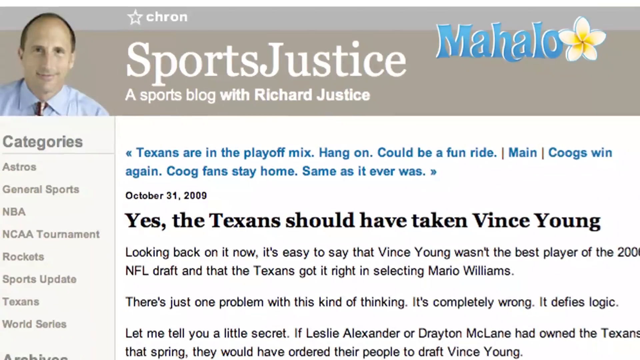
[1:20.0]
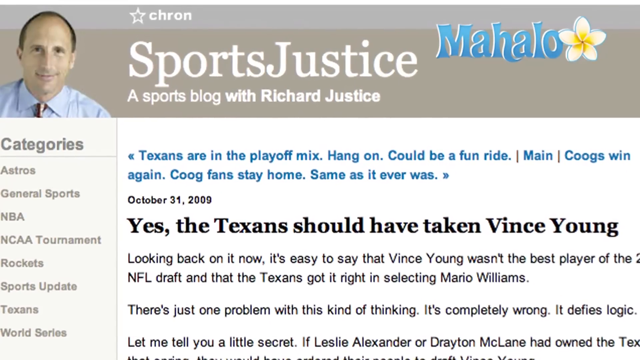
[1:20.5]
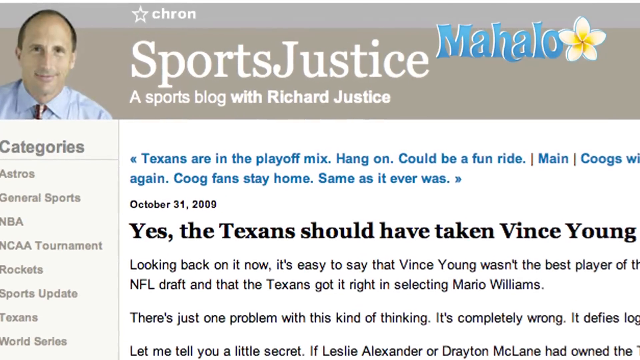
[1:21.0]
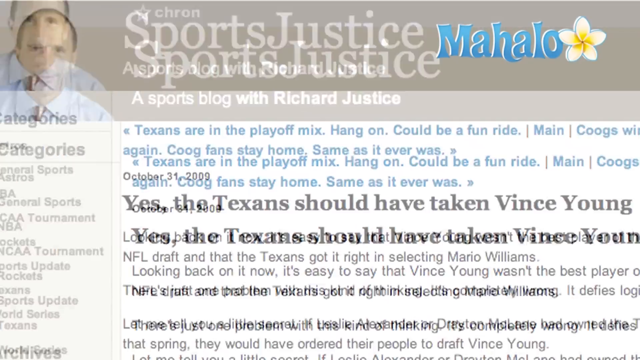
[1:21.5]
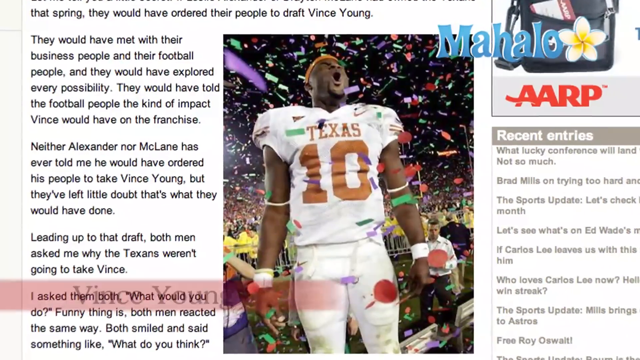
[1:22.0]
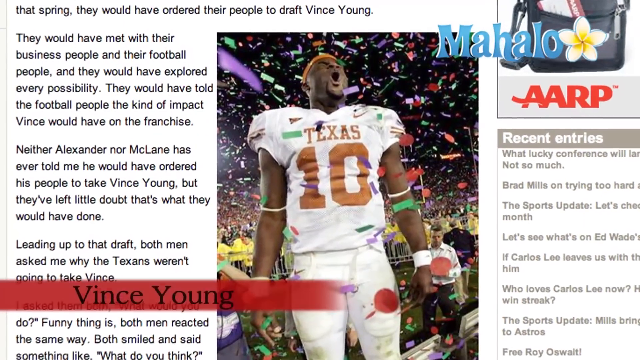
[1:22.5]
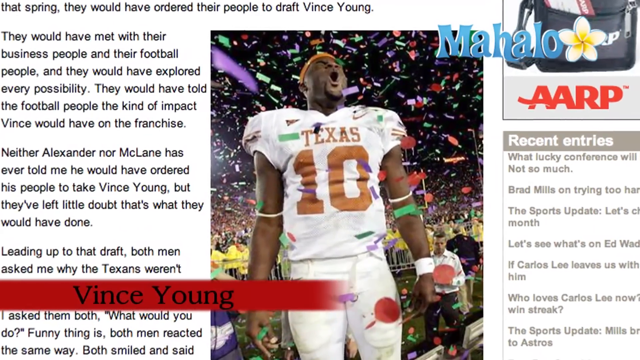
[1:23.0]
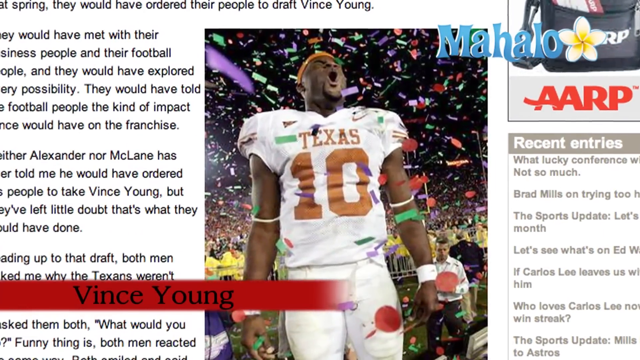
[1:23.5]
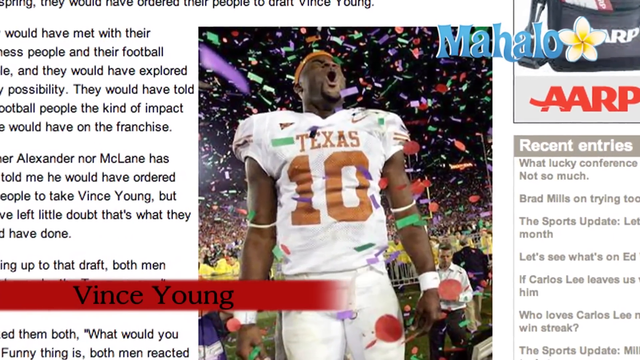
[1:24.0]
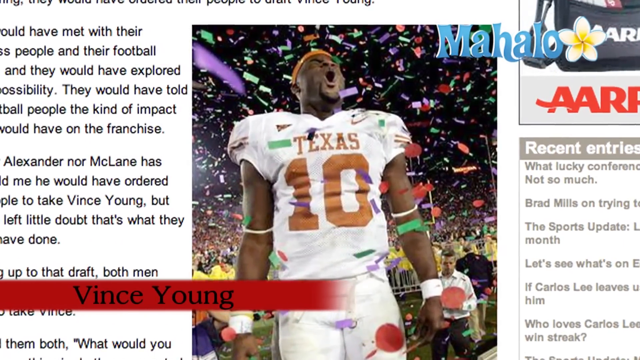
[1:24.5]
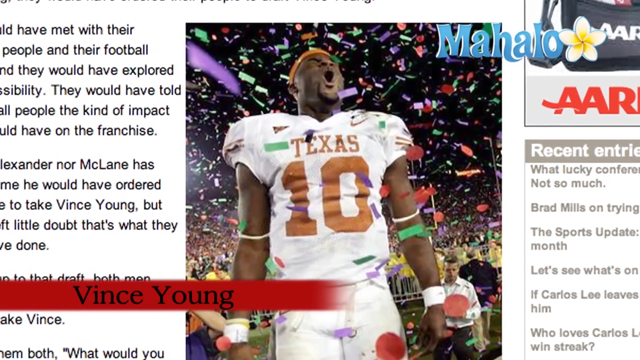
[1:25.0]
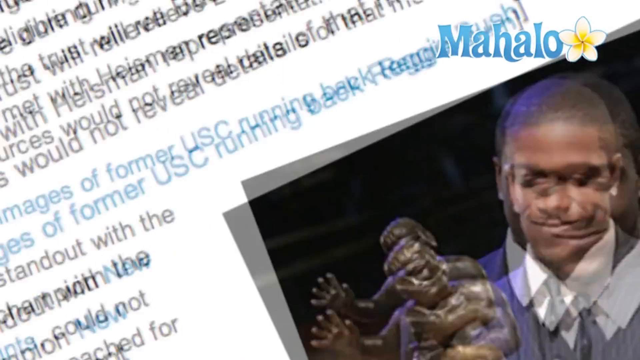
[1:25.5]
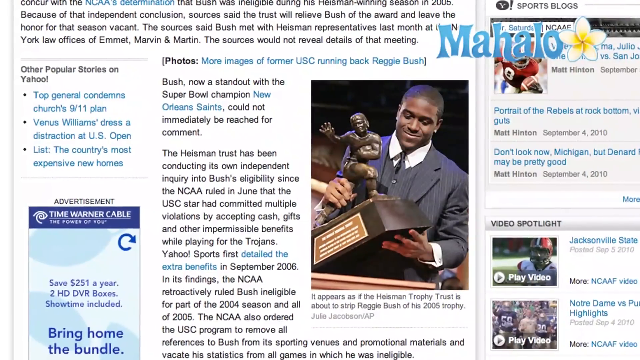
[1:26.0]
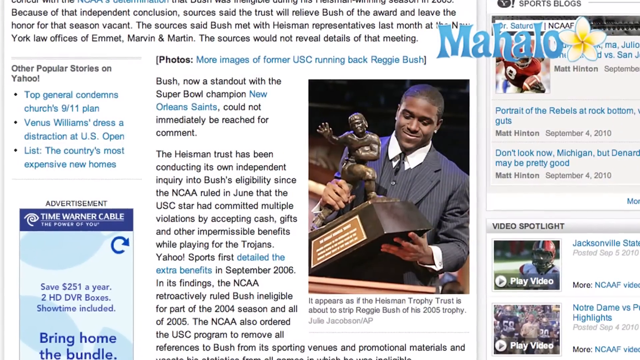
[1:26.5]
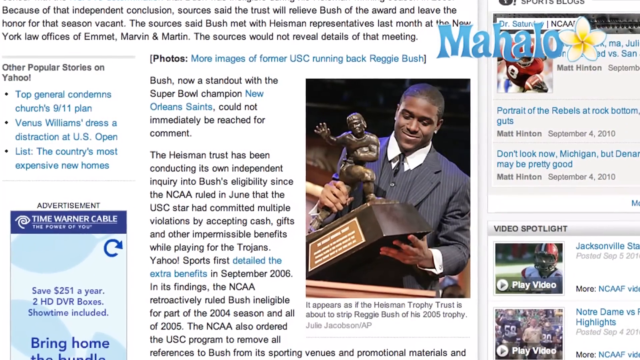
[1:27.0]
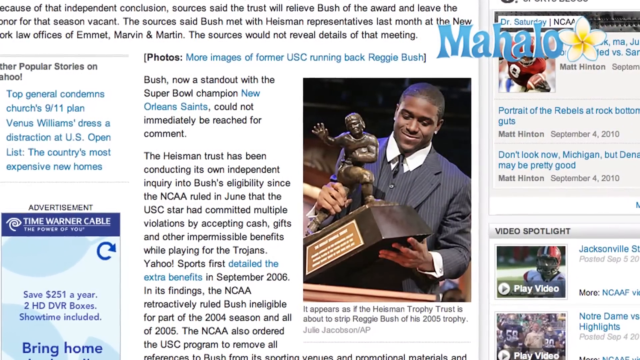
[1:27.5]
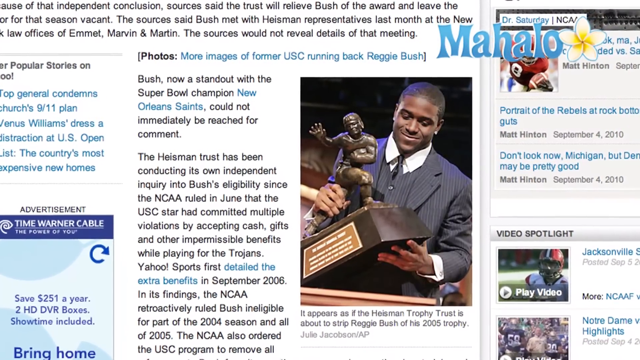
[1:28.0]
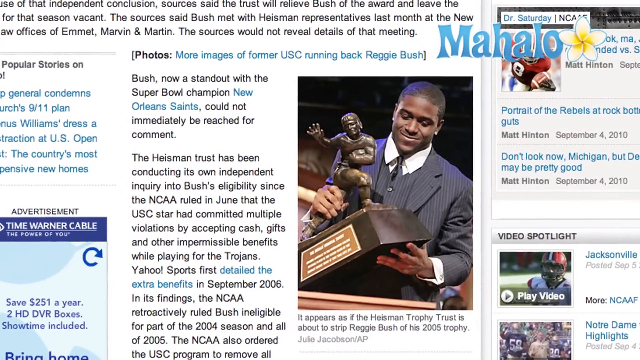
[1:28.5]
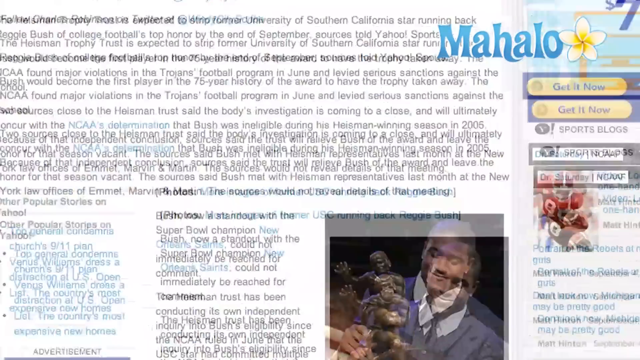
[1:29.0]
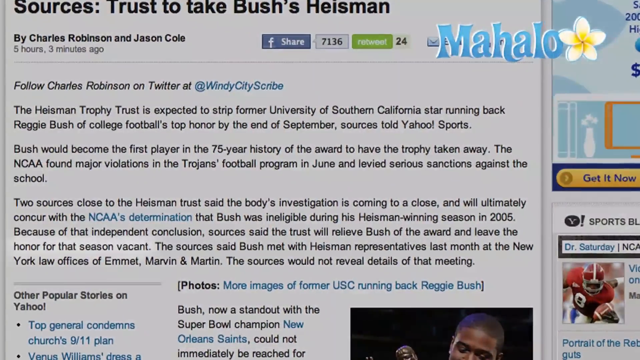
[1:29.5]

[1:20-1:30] Another article appears, and the view zooms in on a man with a very receded hairline and brown hair, wearing a blue collared shirt. He is in the banner at the top, and to the right of him "Sports Justice" is written in white letters, identifying a sports blog with Richard Justice, so the man appears to be Richard Justice. The video then flips to a new article showing a picture of Vince Young, whose name is in a red rectangle in the bottom left corner. He looks to be celebrating after a big game, wearing a Texas jersey with number 10, his head back, and appears to be shouting.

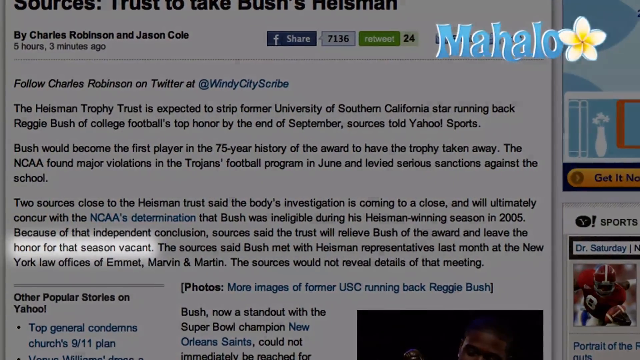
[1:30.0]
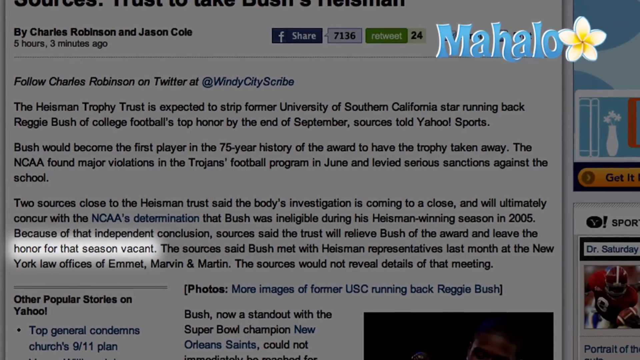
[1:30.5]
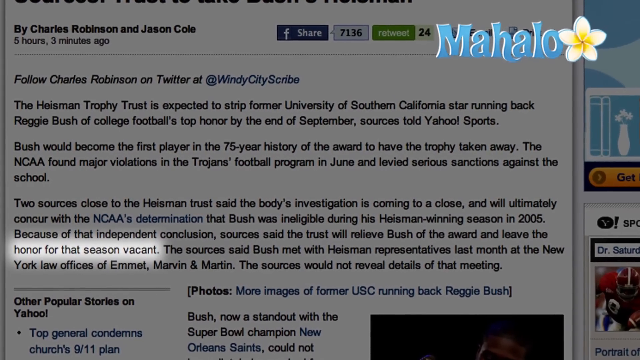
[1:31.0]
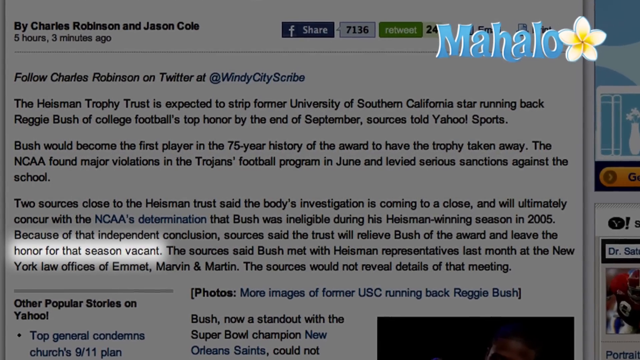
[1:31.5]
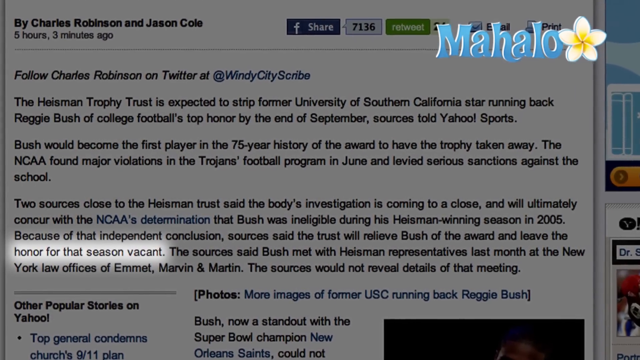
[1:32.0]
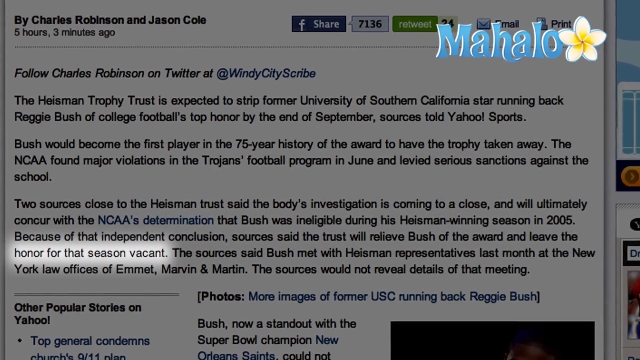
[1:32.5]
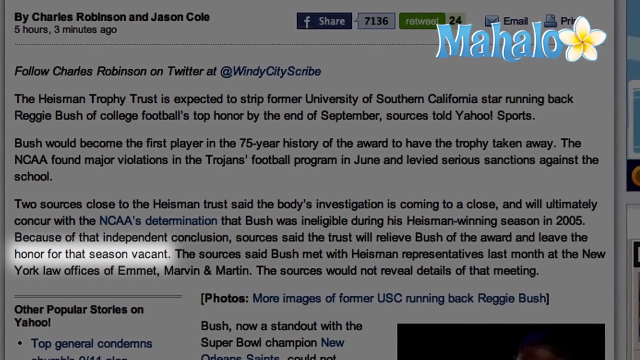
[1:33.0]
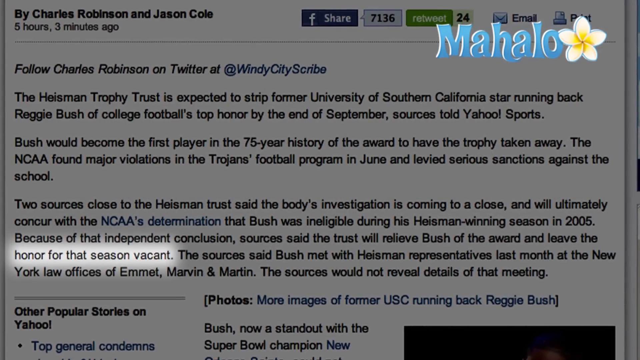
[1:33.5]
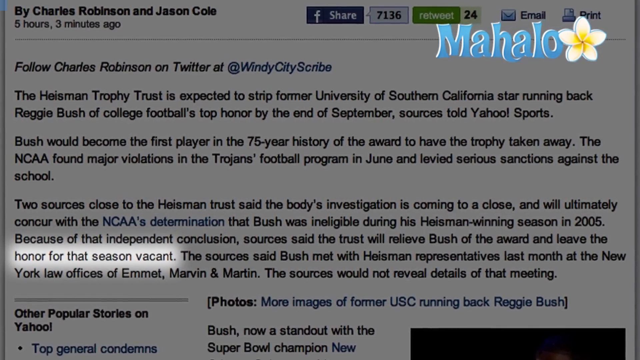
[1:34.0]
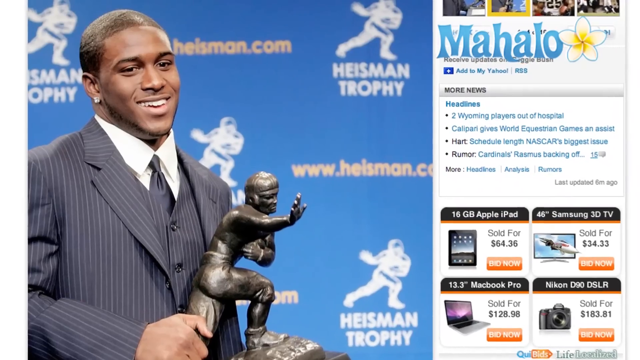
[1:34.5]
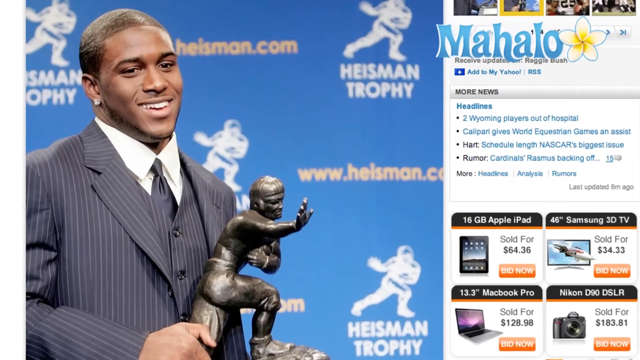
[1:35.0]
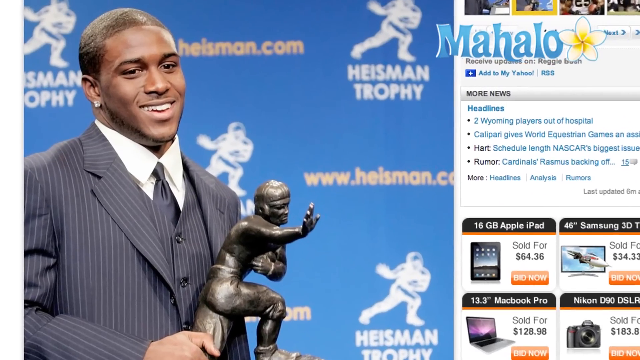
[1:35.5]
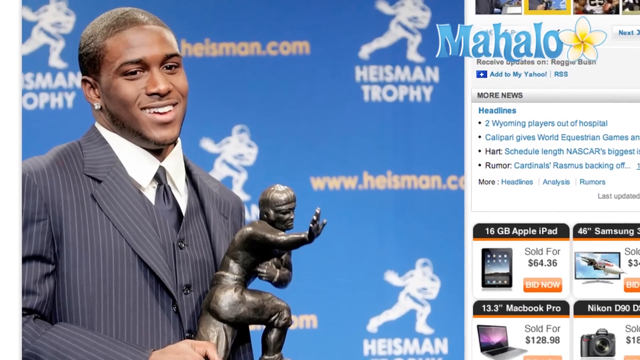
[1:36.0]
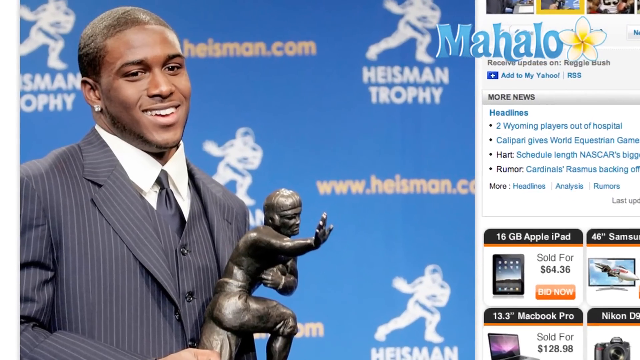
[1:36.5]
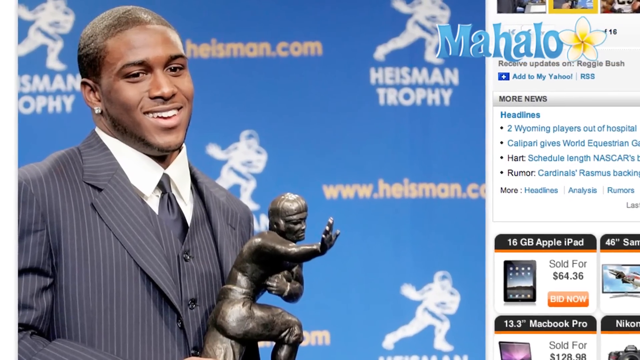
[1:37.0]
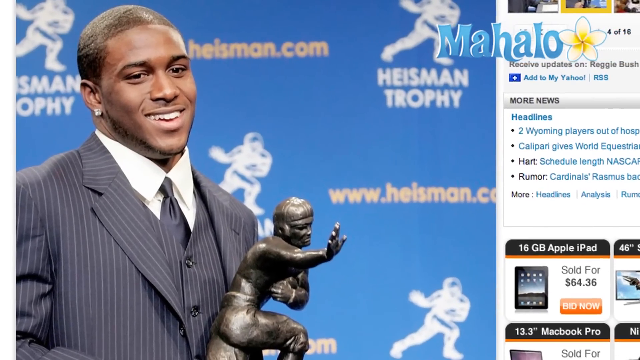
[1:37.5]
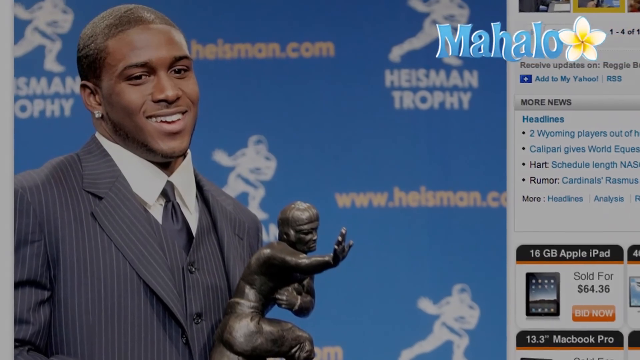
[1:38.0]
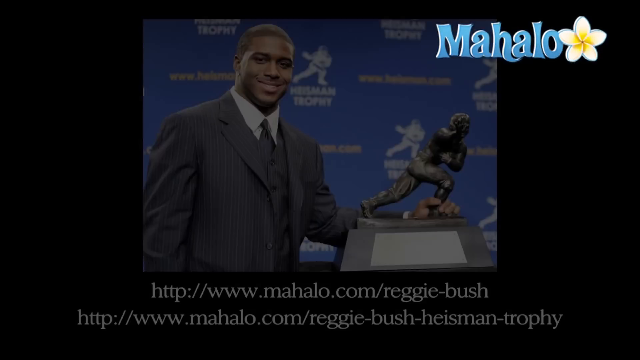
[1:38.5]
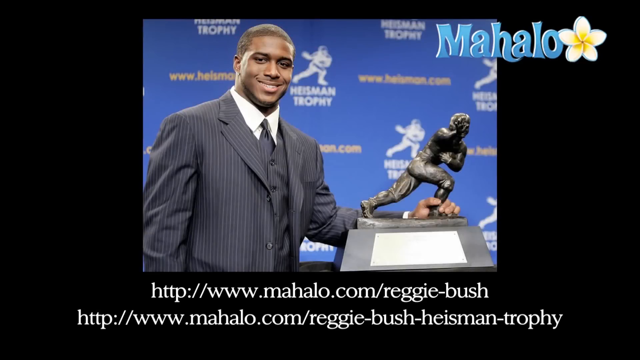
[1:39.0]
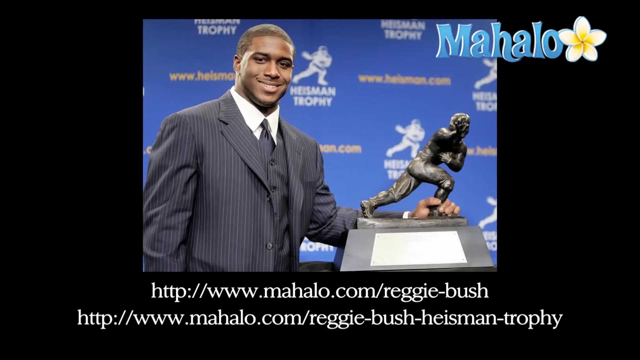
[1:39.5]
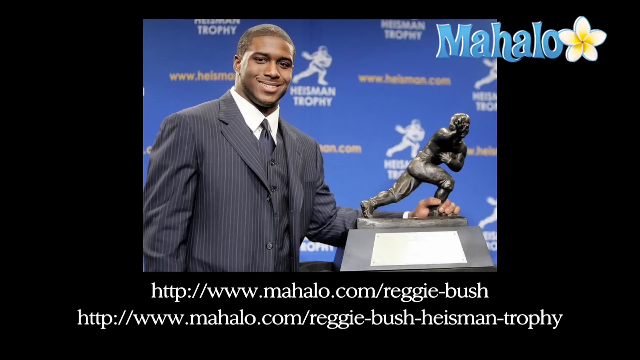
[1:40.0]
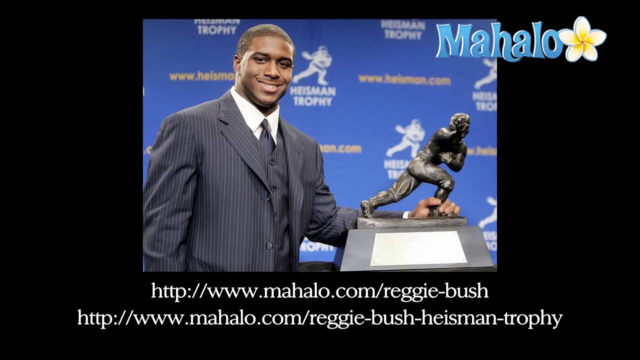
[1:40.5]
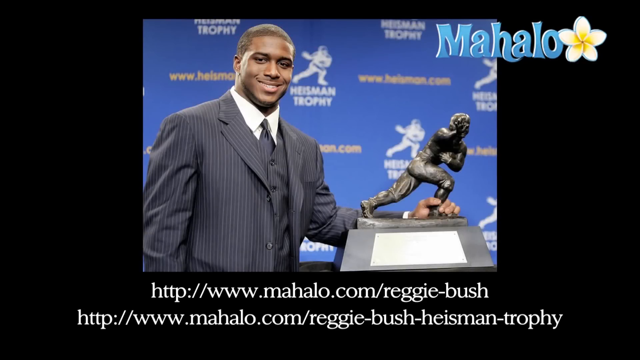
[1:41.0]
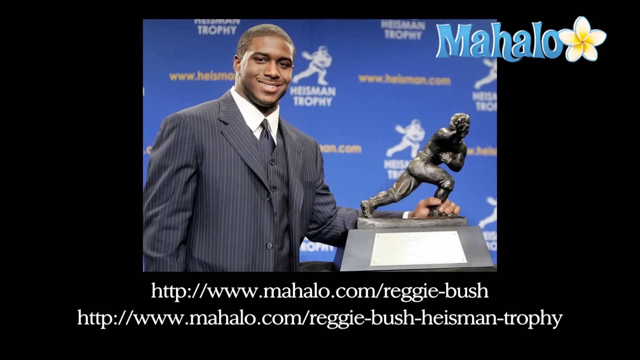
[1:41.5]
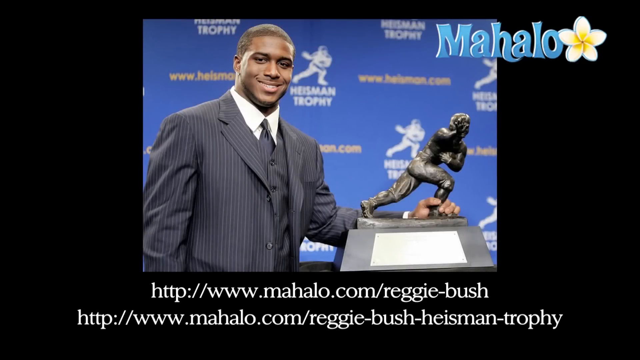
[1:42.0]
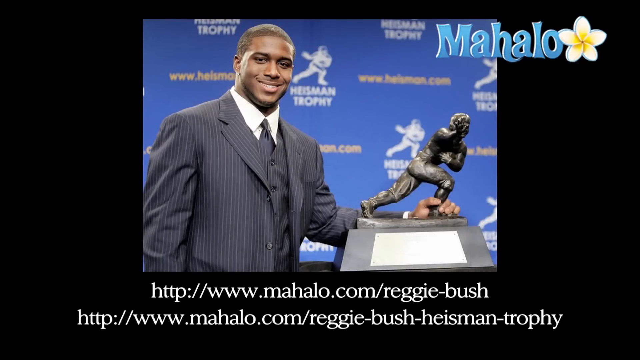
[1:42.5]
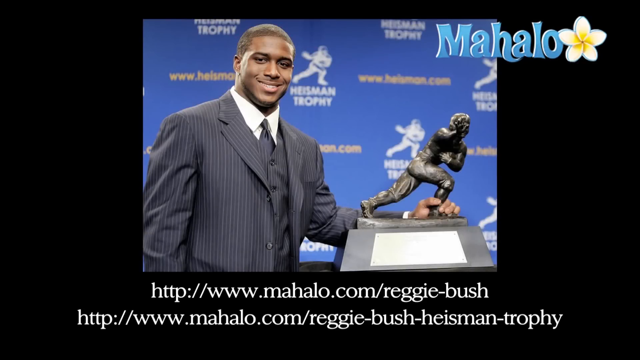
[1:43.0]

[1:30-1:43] Part of an article is highlighted in white, reading "honor for that season vacant." The video then shows another image of Reggie Bush with the Heisman Trophy in his hand. This time he wears a gray pinstripe suit, has an earring in his right ear, and has a big smile showing his teeth. Behind him is a blue Heisman Trophy screen or print, like one at a news conference, covered with white Heisman Trophy images in the classic pose.